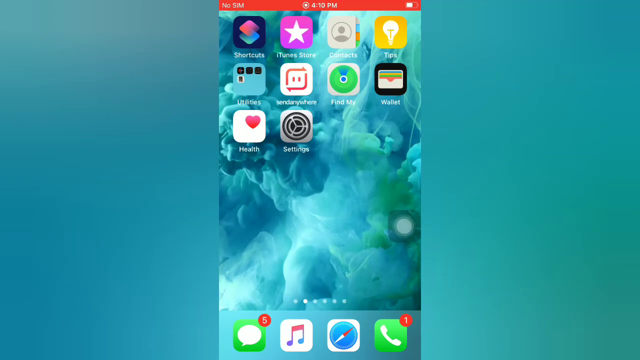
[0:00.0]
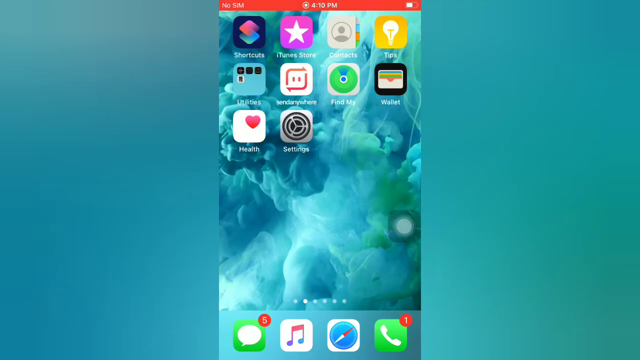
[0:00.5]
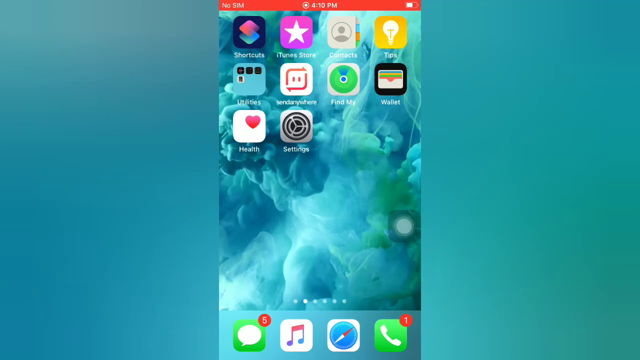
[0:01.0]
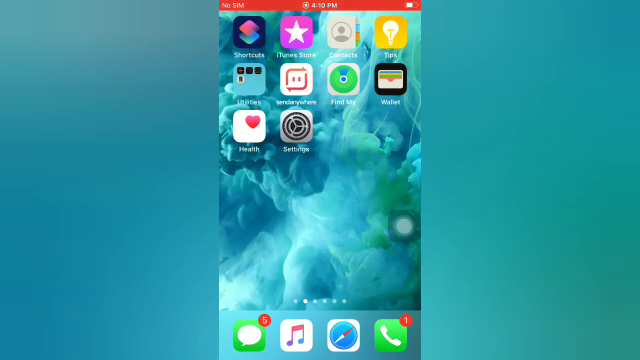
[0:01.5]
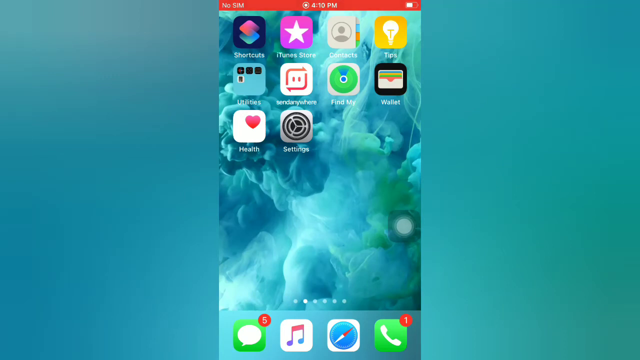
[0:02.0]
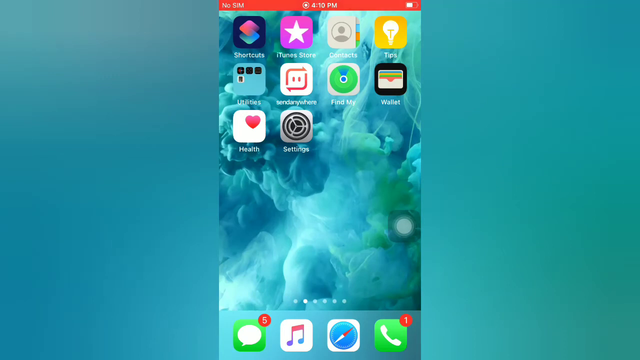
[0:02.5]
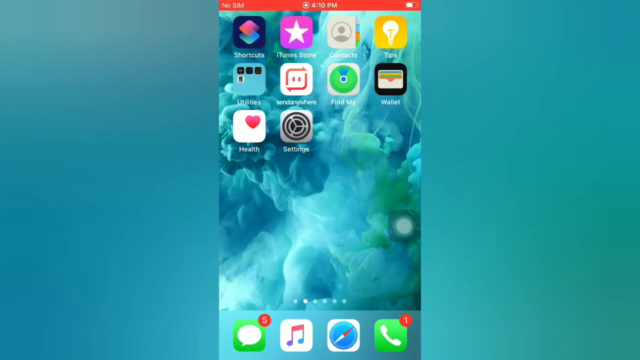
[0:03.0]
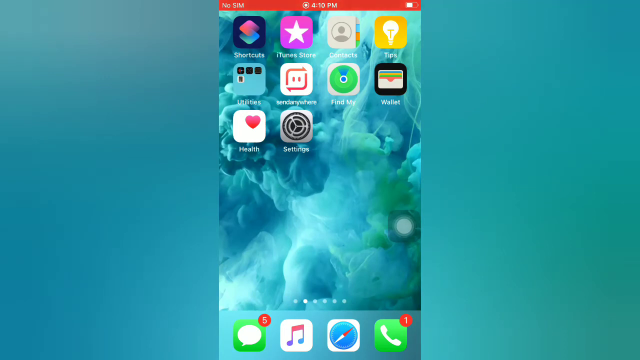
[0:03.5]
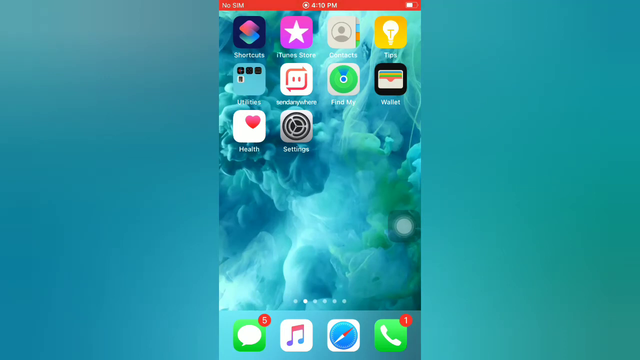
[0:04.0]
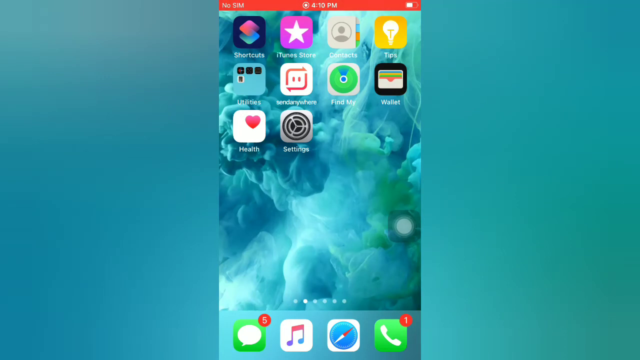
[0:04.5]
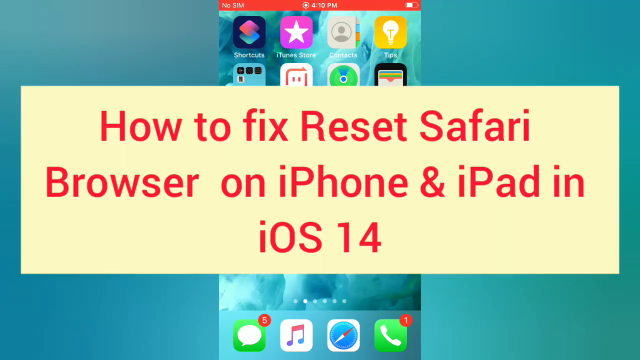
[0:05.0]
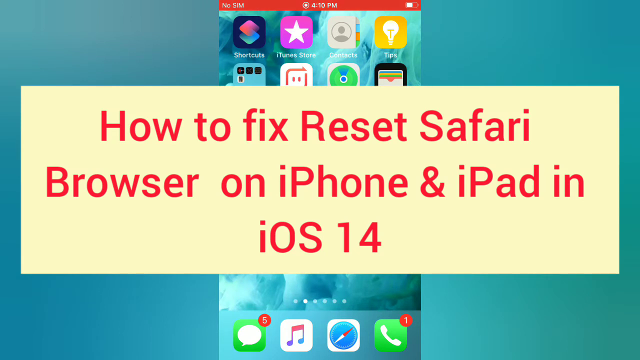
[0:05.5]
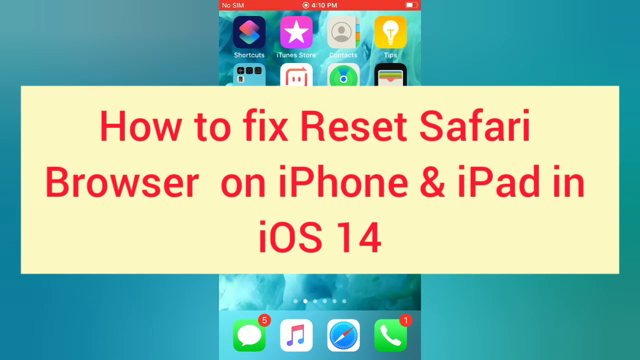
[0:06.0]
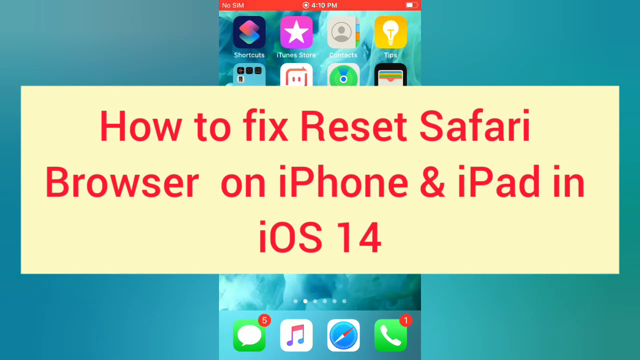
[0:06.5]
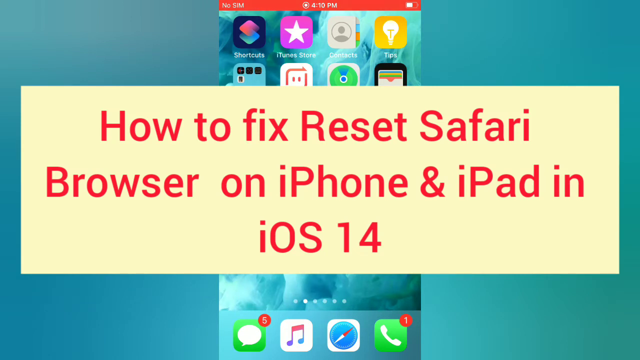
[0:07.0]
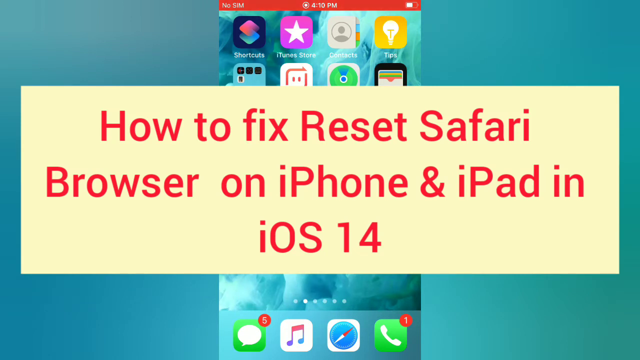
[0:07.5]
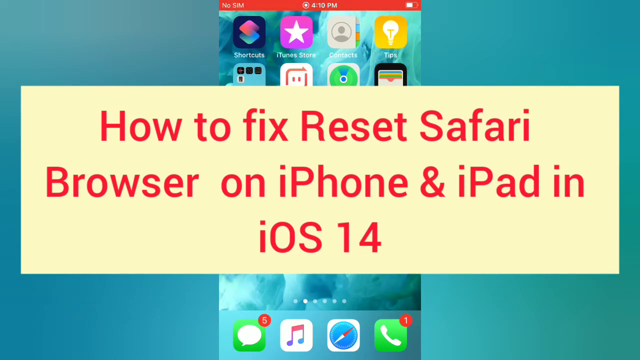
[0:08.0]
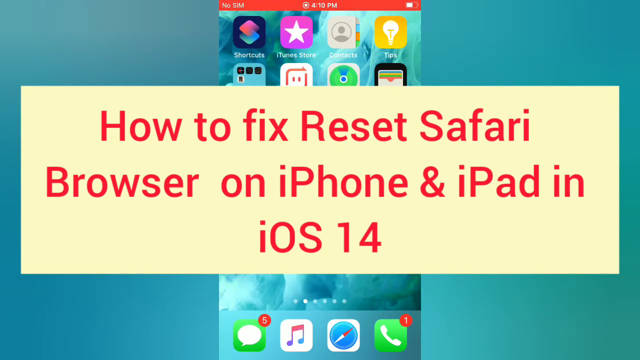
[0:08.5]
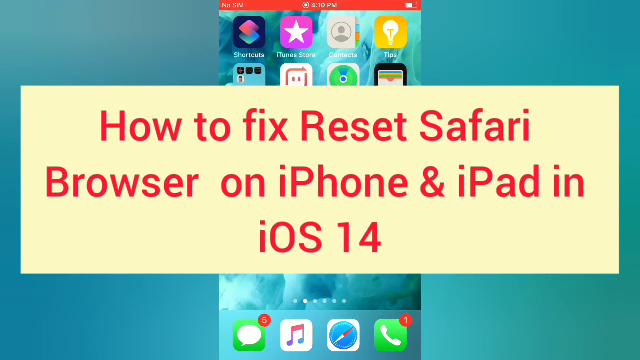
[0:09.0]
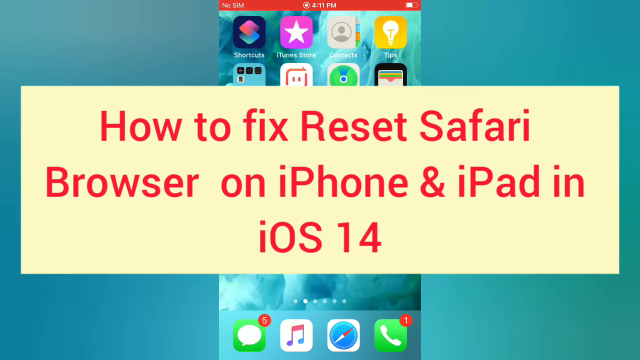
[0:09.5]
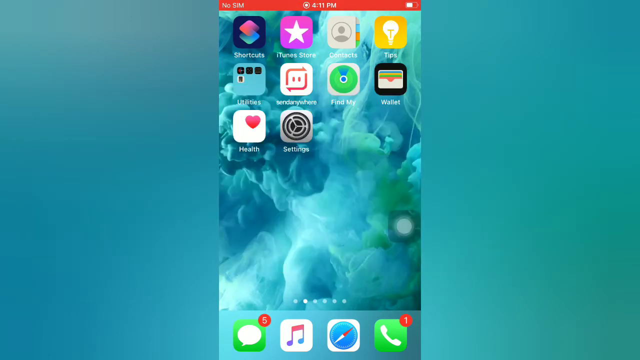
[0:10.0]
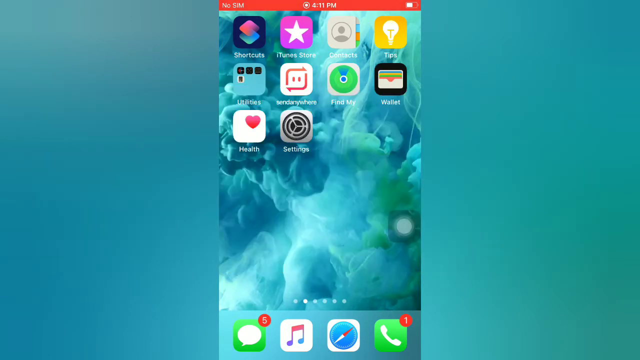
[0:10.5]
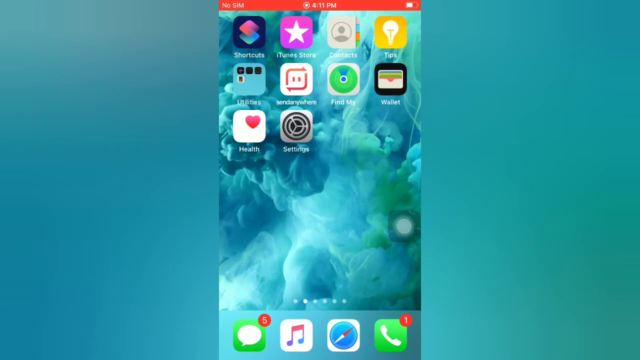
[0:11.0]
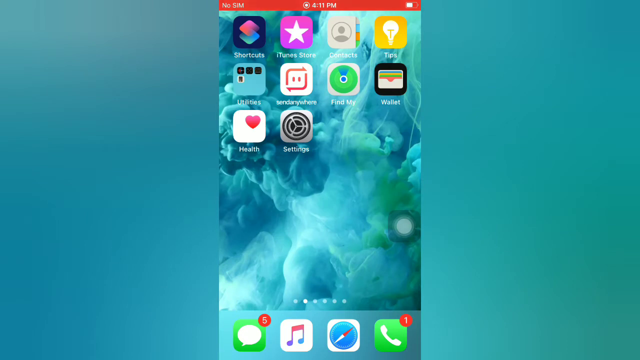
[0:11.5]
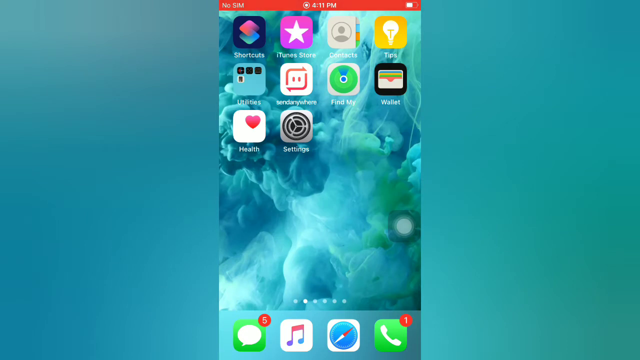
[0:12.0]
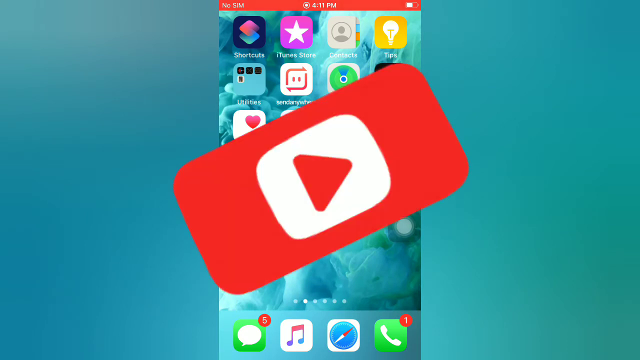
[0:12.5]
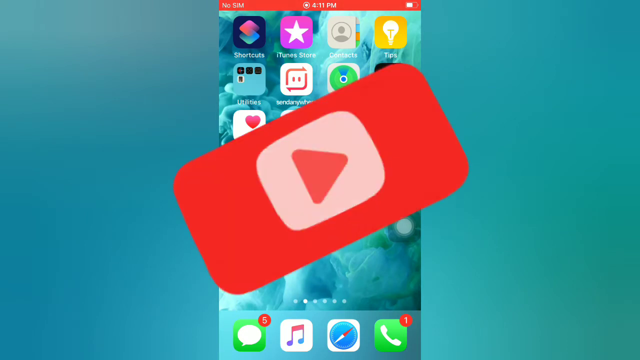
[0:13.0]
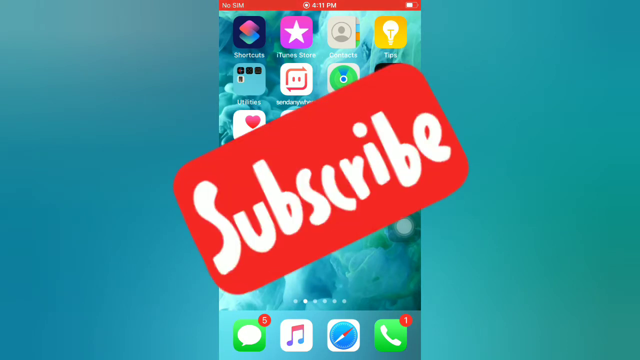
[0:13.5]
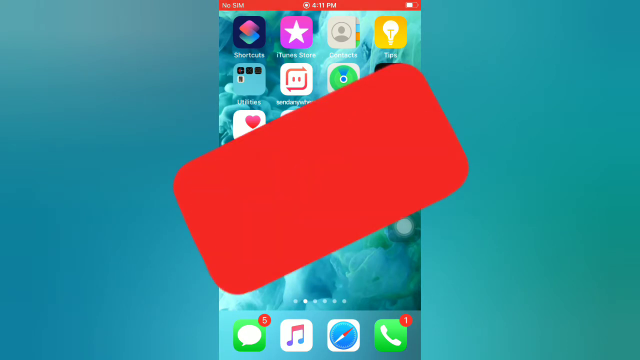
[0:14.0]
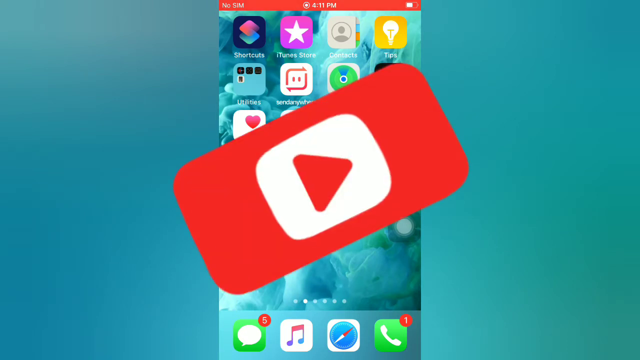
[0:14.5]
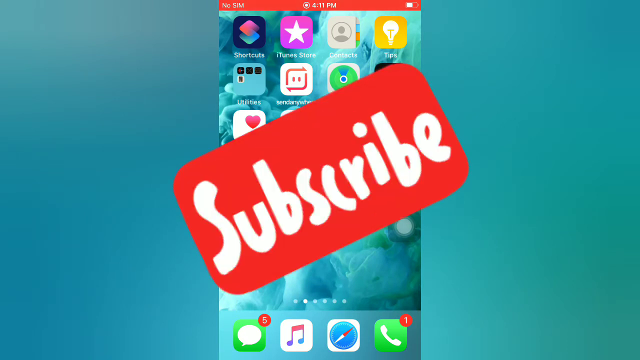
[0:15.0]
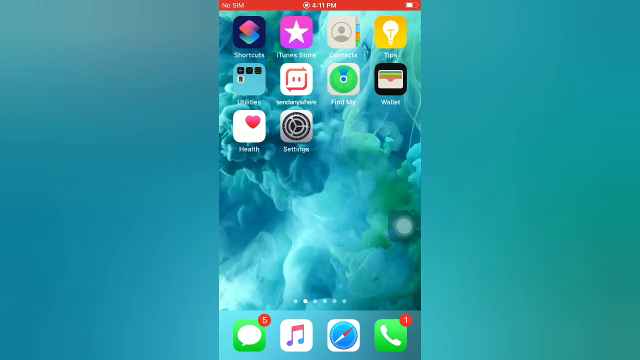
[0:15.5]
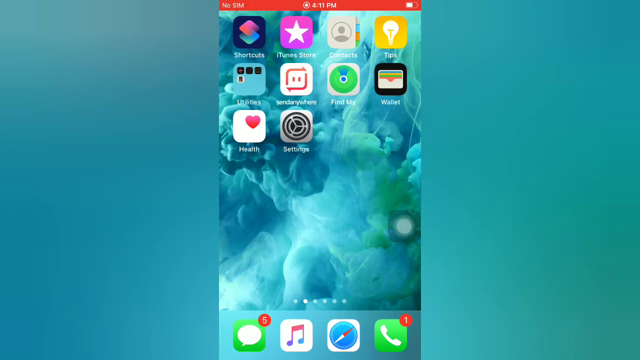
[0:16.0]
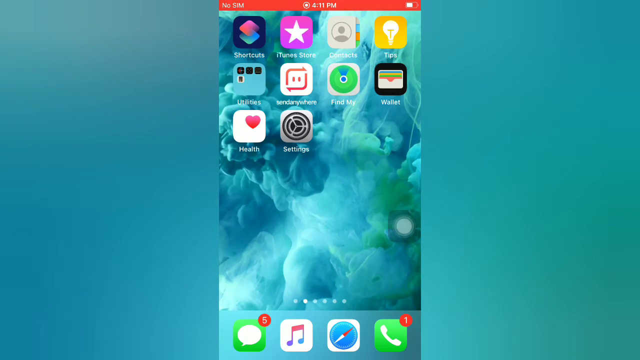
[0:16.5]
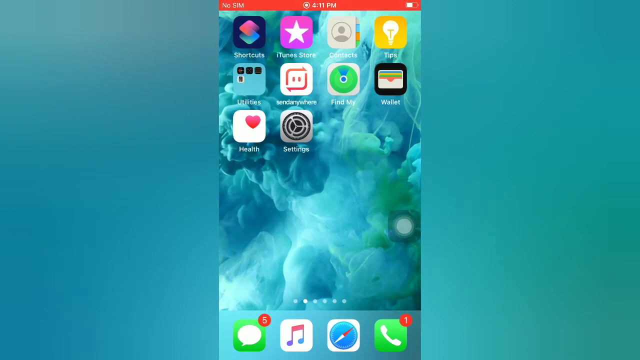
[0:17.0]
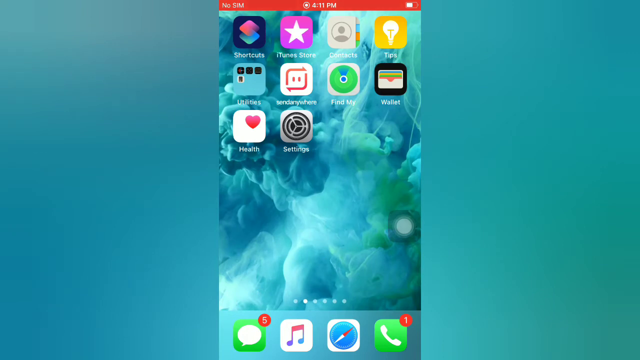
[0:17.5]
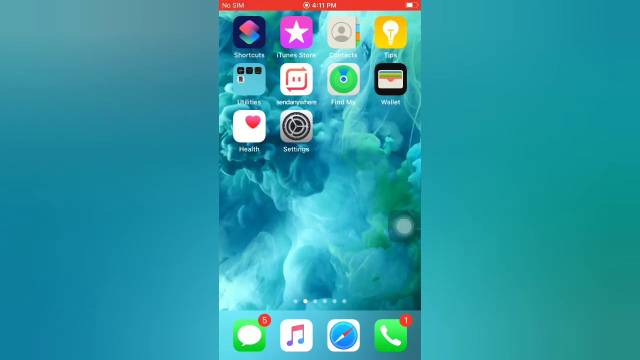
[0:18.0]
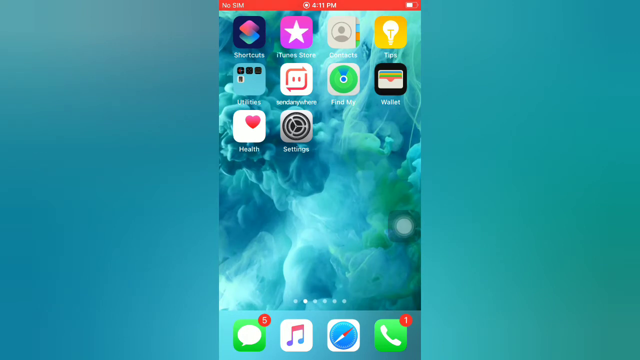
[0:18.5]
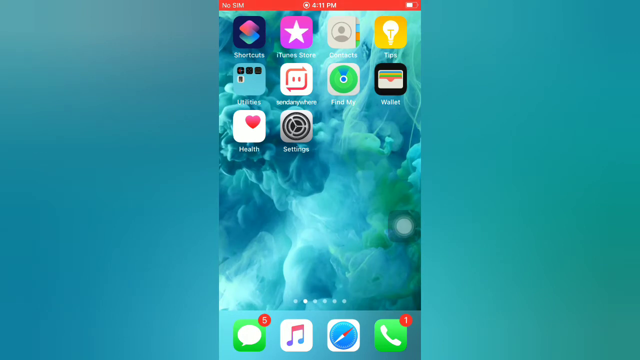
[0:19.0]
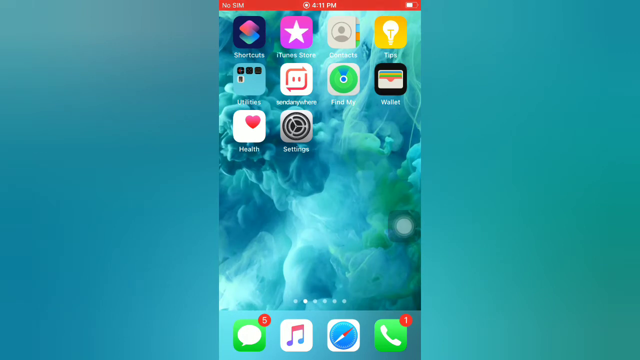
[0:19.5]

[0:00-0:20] A mobile screen with various apps is displayed, and then the text 'how to fix reset safari browser on iphone and ipad in ios 14' appears in red on a sandal background. A YouTube logo and subscribe icon gif then appear over the mobile app screen. Nine apps are displayed on the screen in 3 columns and 4 rows. White dots at the bottom show that this is the second of six screens, and below them are four app icons: Message, Music, Browser and Phone. The background is cloudy, with thick brush strokes smudged in dark and light blue mixed with white and green. The message icon shows 5 notifications and the phone icon shows 1 notification, indicated at the top right of each icon. A red banner at the top has the time, a charger icon and no sim written on it in white.